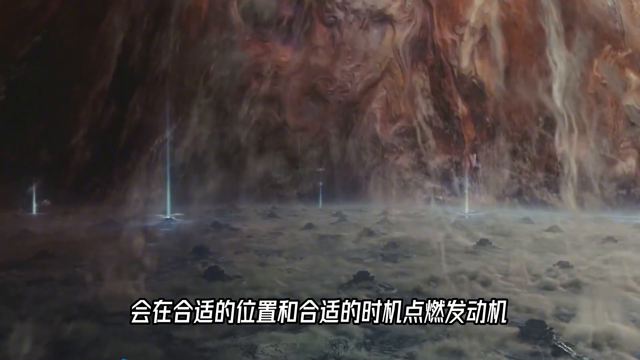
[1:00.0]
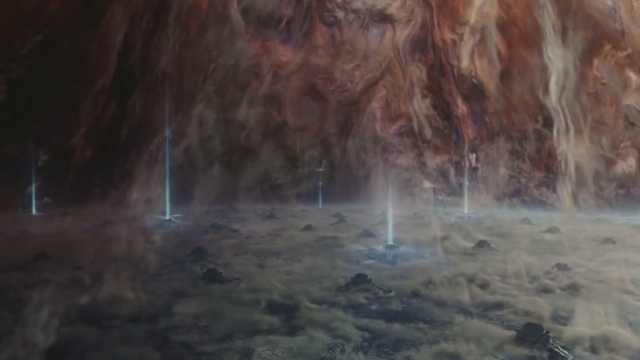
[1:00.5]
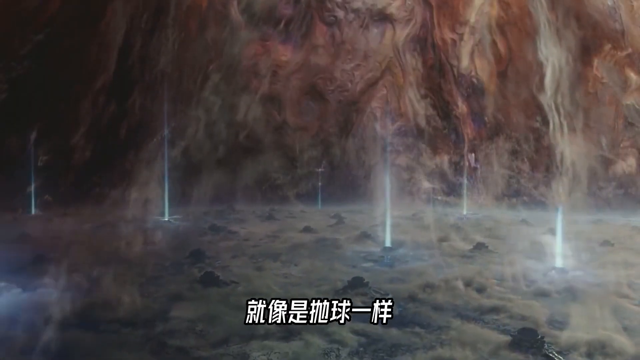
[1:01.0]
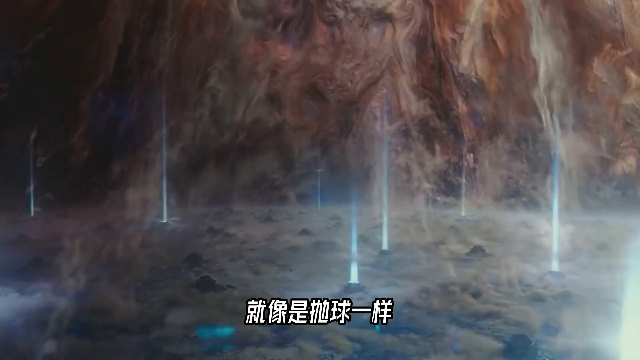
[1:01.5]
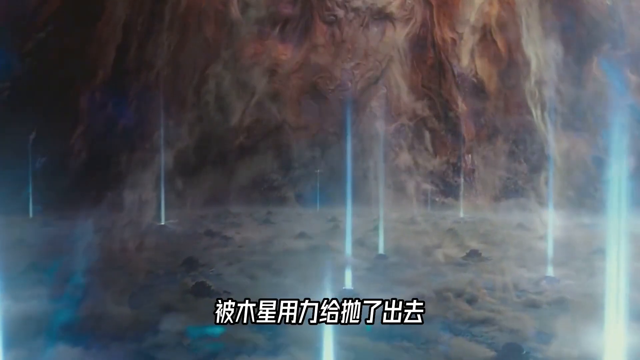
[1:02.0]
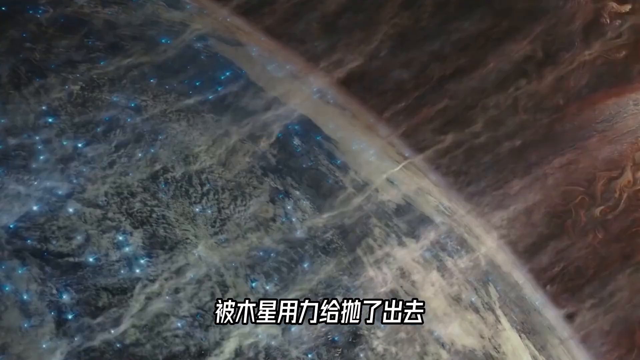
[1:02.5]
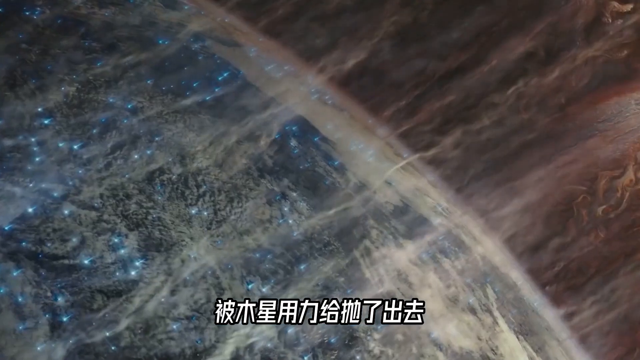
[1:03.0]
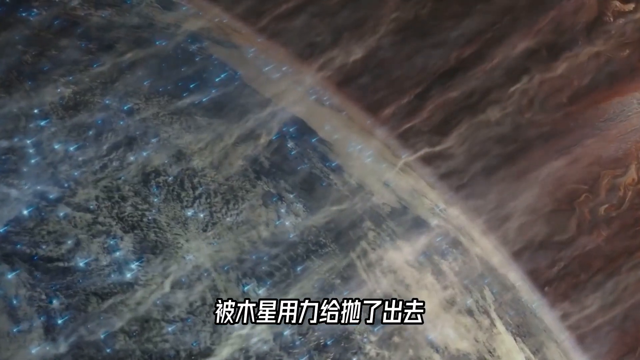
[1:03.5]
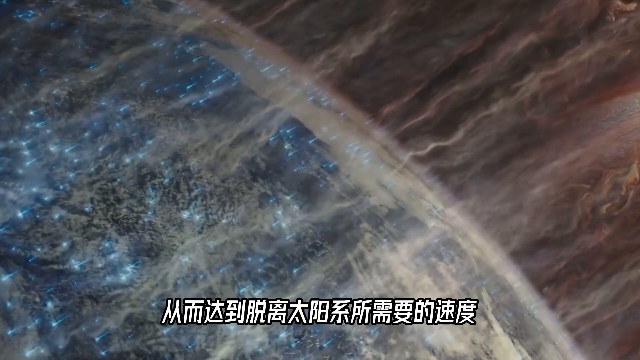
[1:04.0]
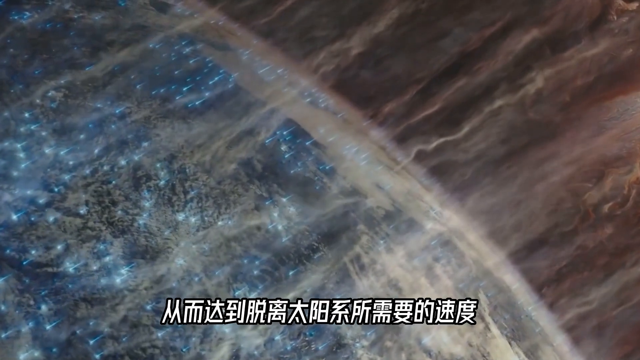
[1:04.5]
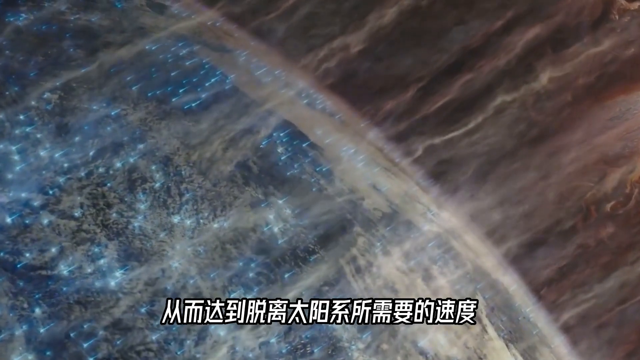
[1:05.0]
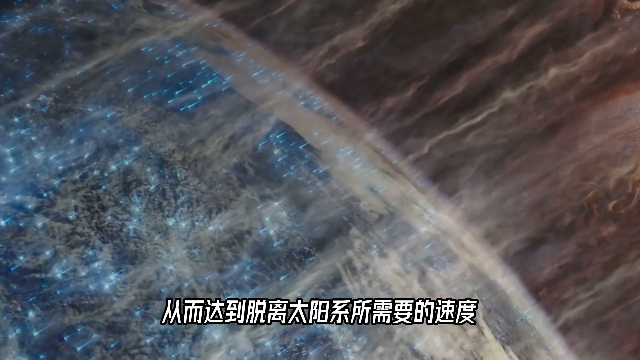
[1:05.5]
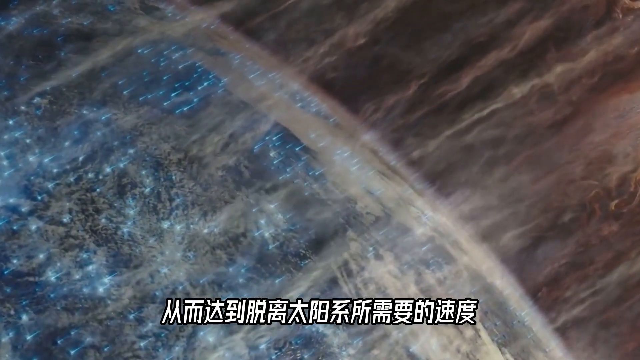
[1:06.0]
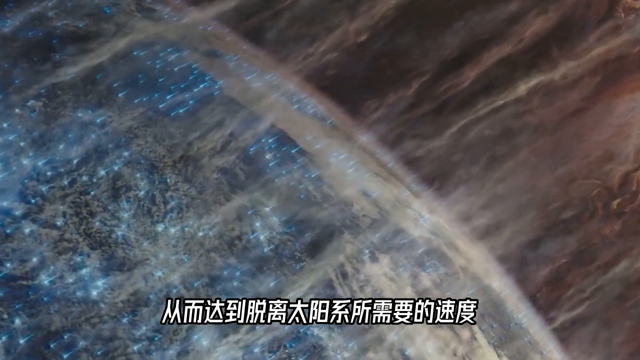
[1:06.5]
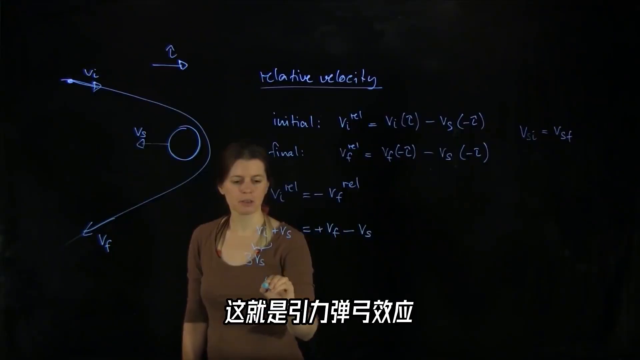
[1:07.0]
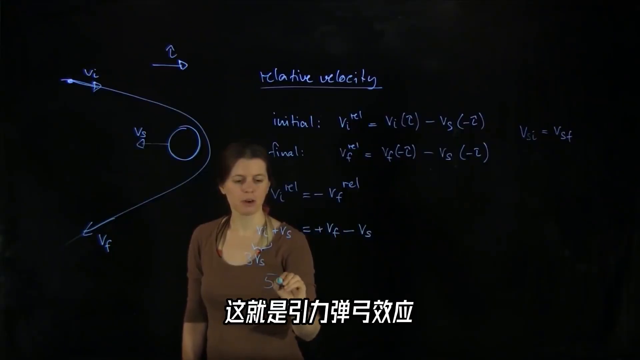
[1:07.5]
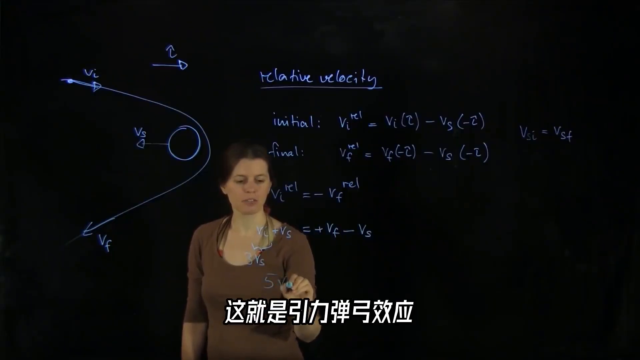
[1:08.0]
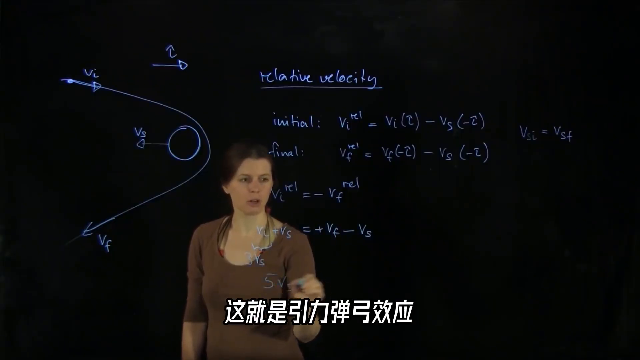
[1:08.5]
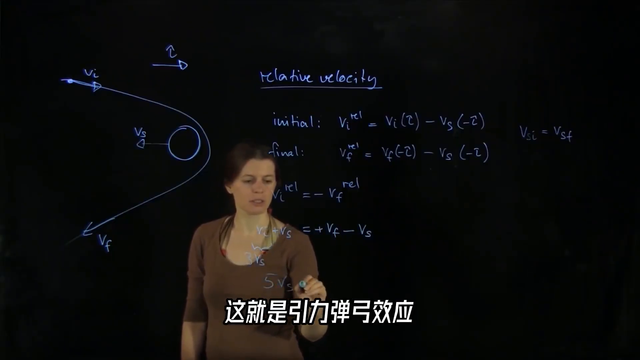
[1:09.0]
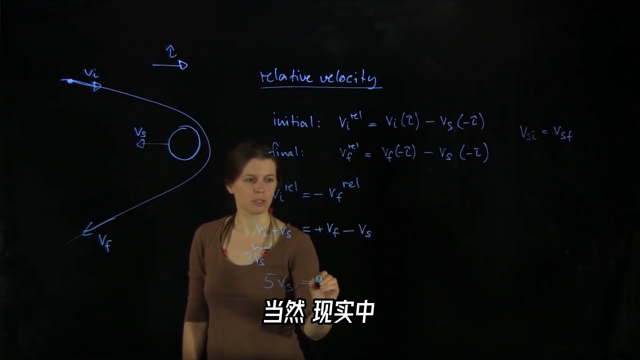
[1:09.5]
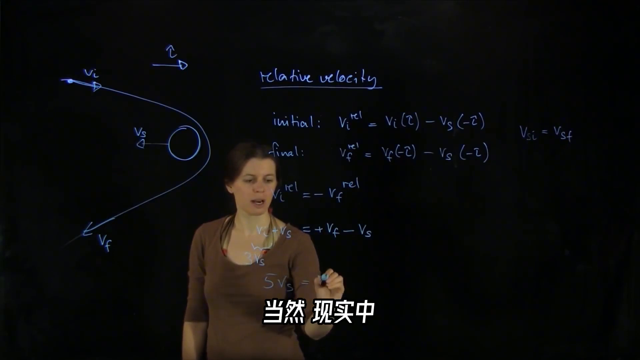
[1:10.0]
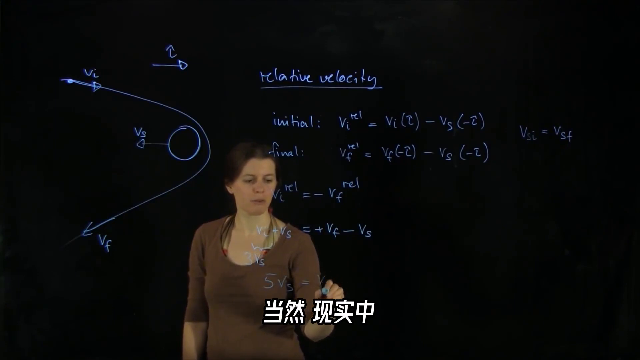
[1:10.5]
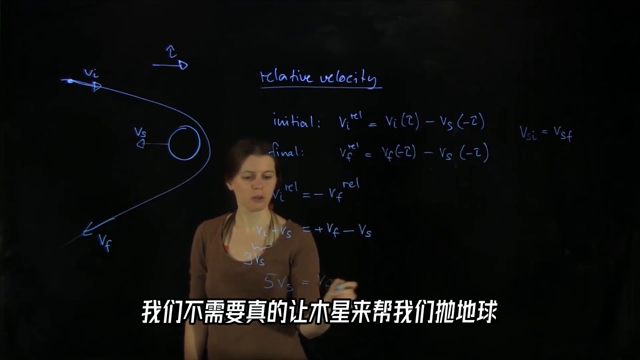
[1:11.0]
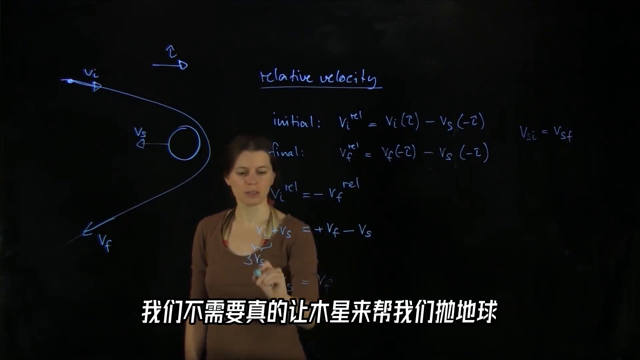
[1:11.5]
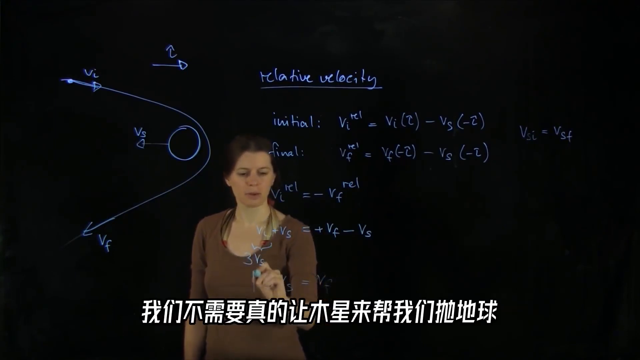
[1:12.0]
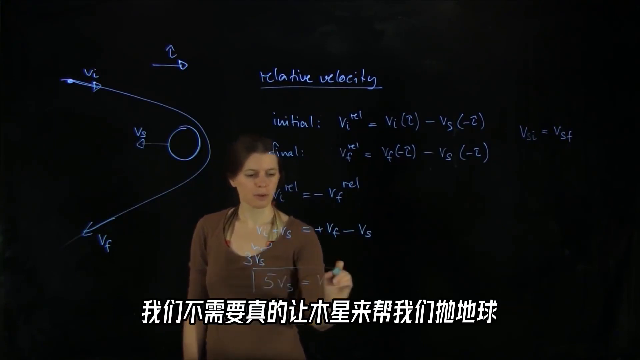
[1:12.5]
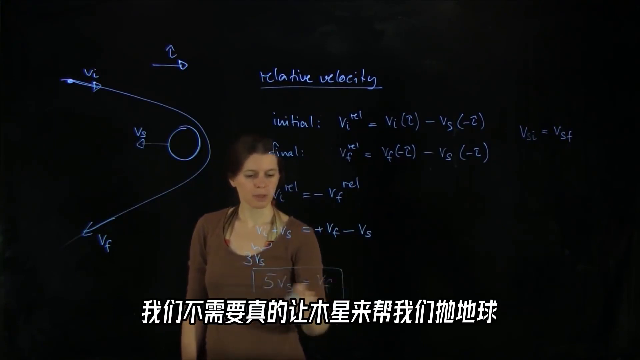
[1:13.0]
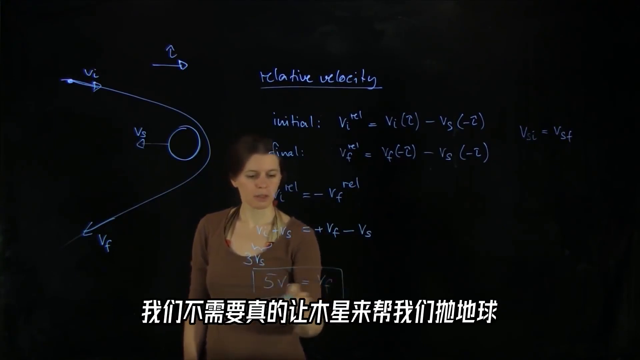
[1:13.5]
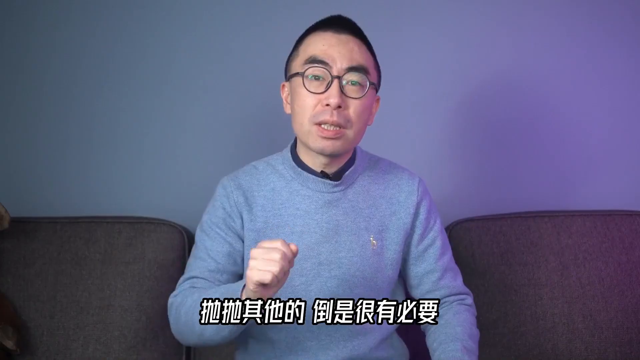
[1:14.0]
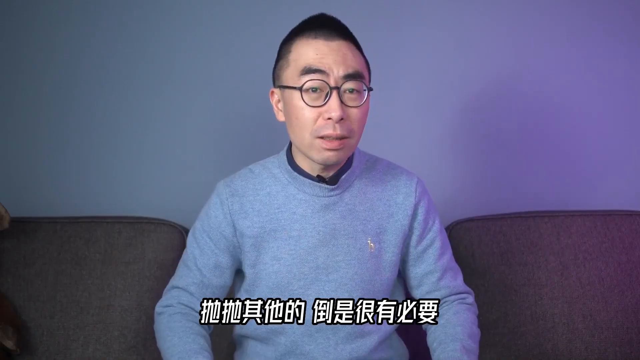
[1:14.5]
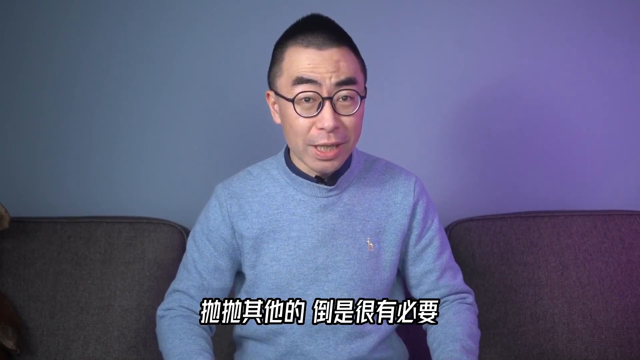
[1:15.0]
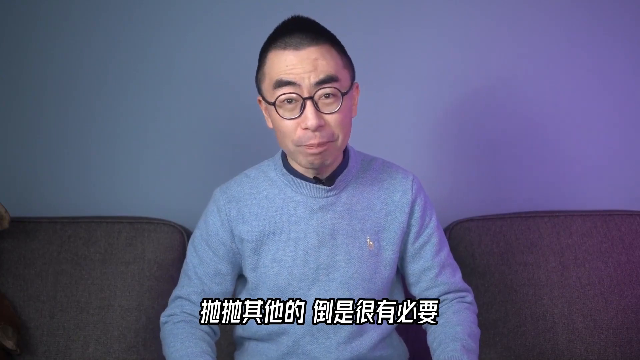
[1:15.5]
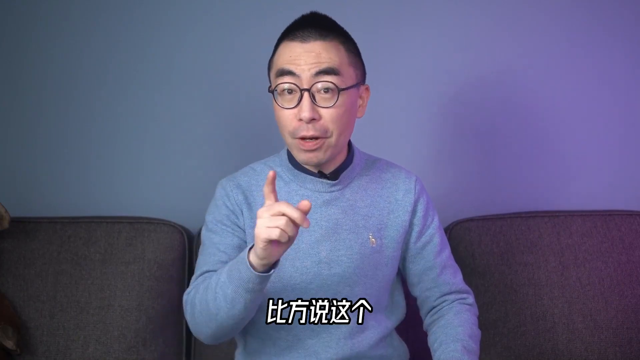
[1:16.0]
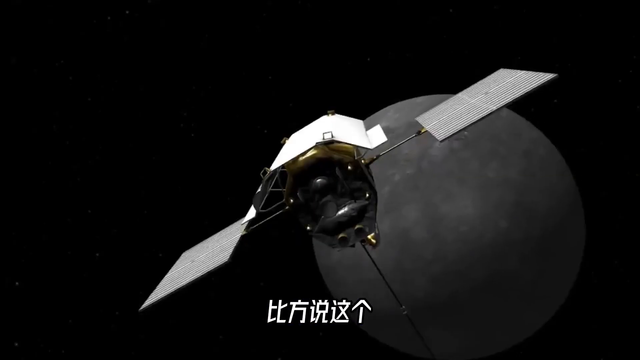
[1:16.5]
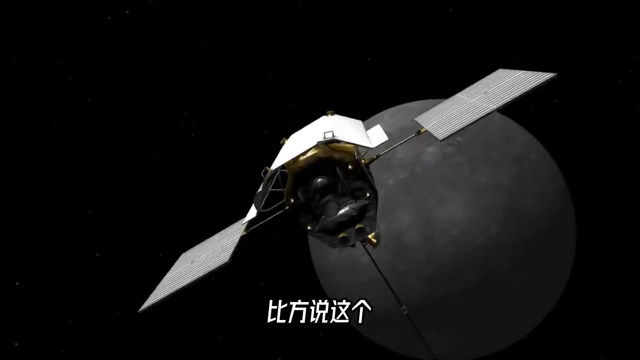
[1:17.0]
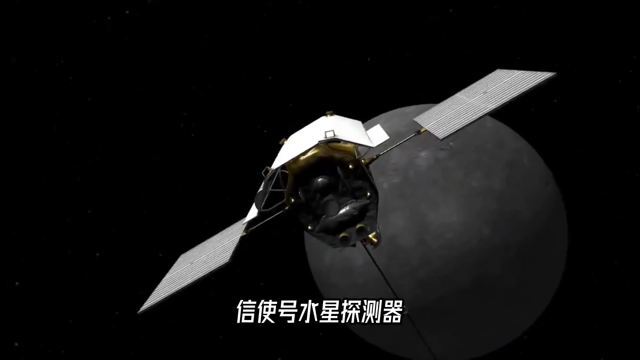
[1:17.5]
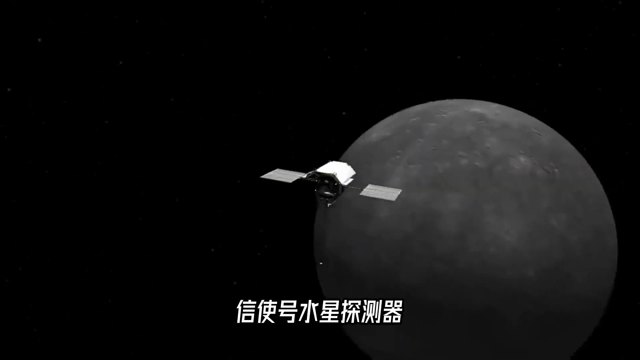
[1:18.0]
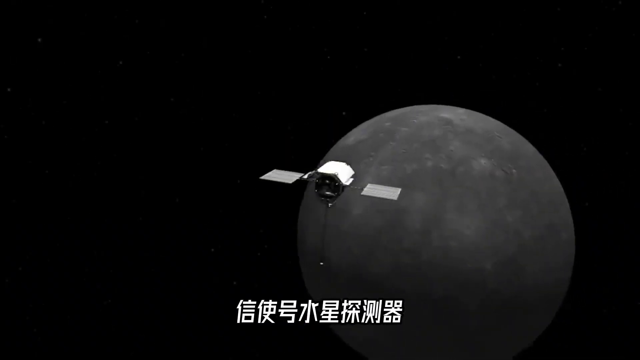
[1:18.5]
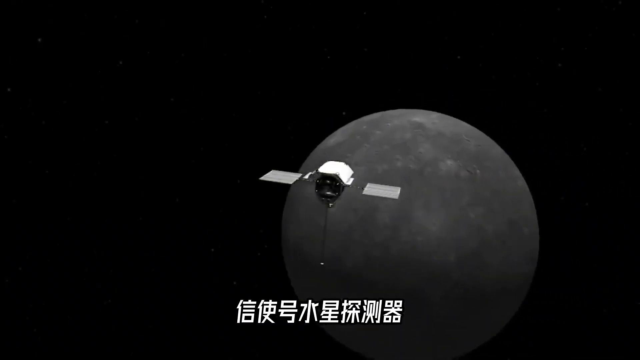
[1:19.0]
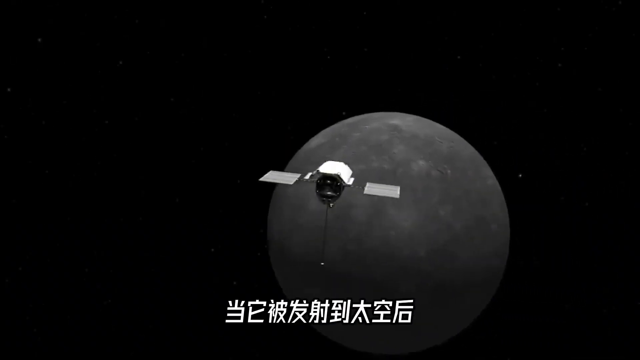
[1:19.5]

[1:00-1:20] A computer-animated close-up shows planet Earth from outer space, with the view positioned right between outer space and Earth's atmosphere. Lines of vapor emanate from the surface of the planet. The scene changes to a black, space-like background, in the center of which a Caucasian woman in a mid-sleeved brown shirt writes on an invisible blackboard. The blackboard shows the theory of relative velocity, with equations representing it and other diagrams. The woman talks while she writes. Next, indoors, an Asian man in a long-sleeve gray sweater talks to the screen while sitting on a long gray couch. A computer-animated sequence then shows a satellite orbiting around a planet in outer space.